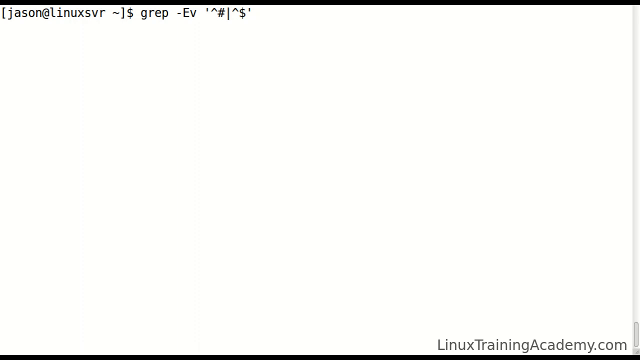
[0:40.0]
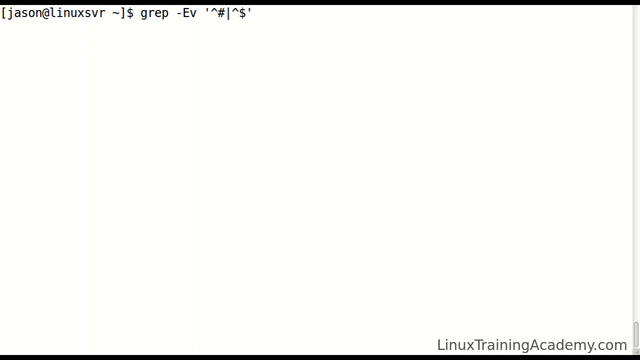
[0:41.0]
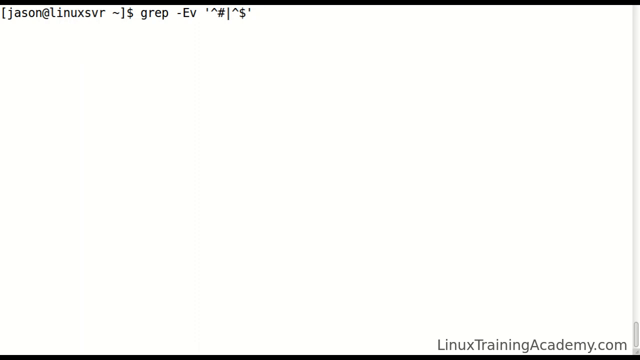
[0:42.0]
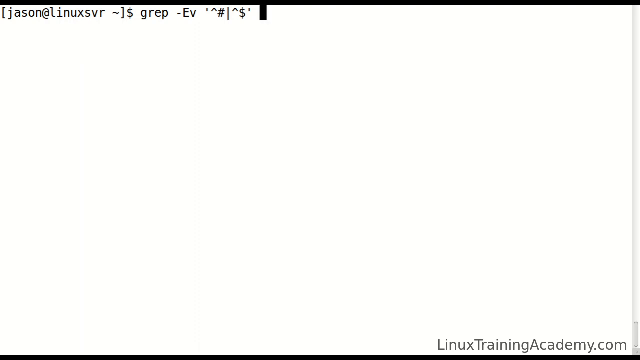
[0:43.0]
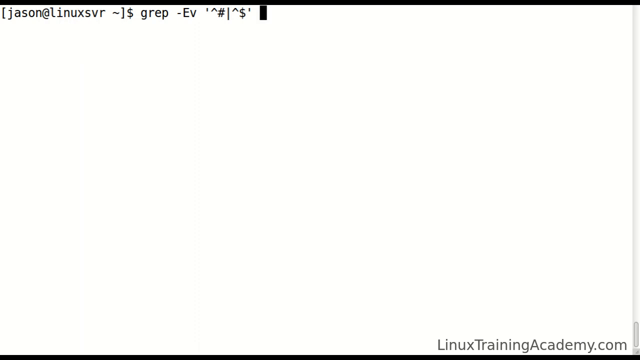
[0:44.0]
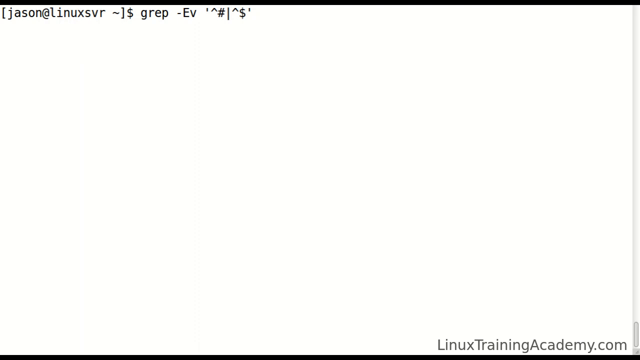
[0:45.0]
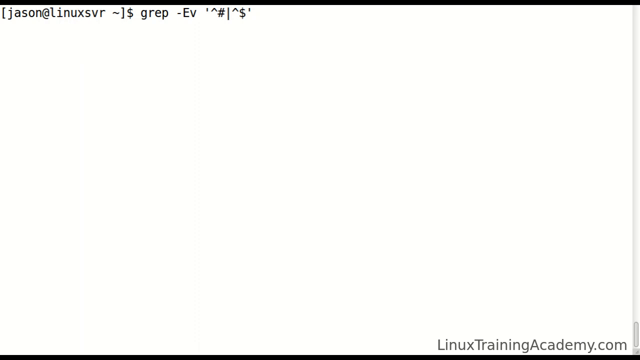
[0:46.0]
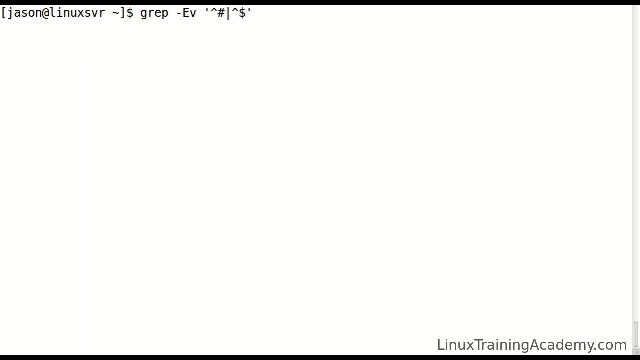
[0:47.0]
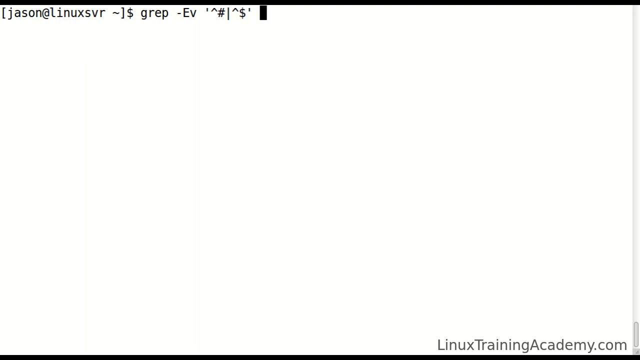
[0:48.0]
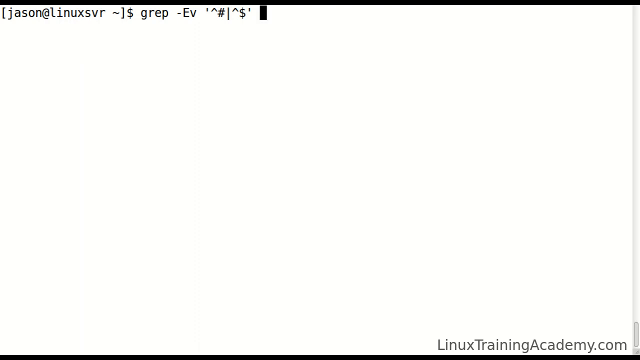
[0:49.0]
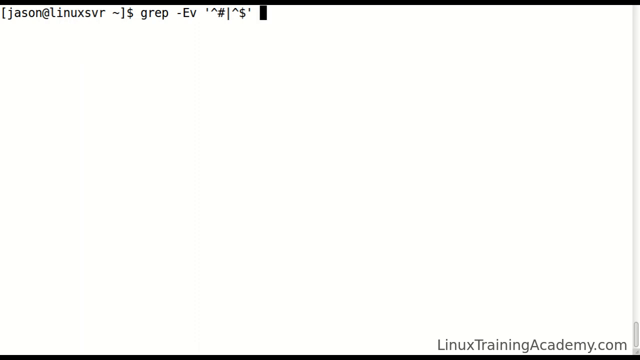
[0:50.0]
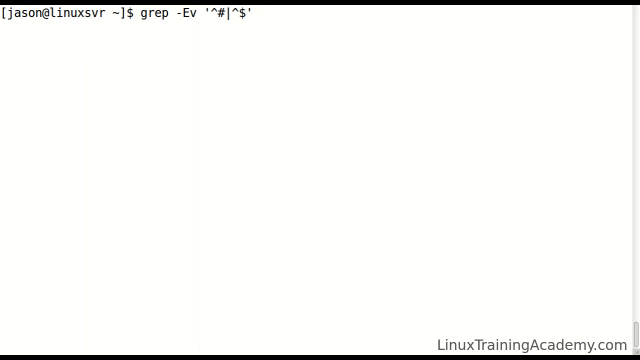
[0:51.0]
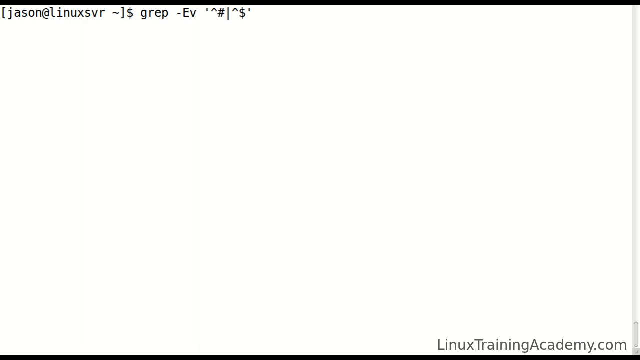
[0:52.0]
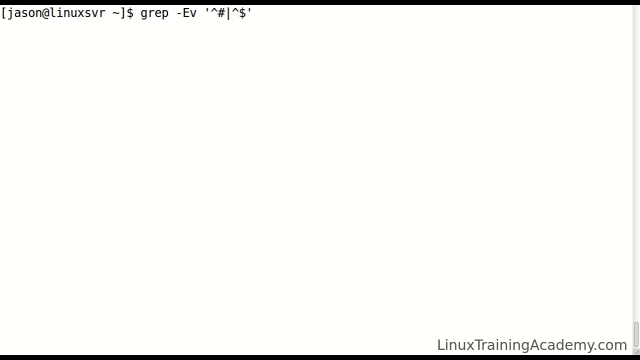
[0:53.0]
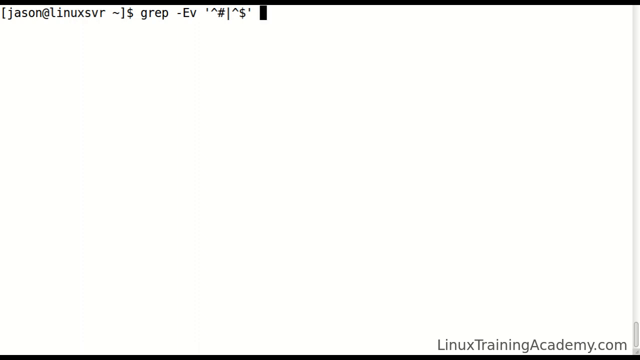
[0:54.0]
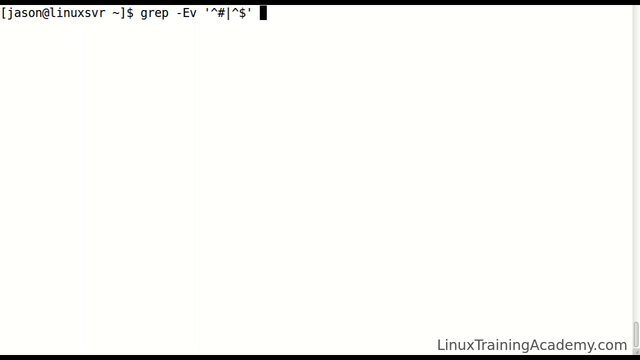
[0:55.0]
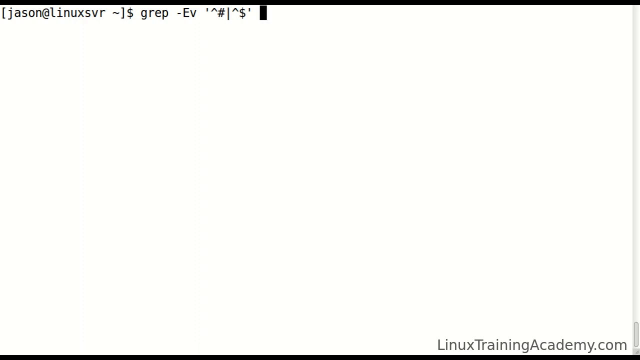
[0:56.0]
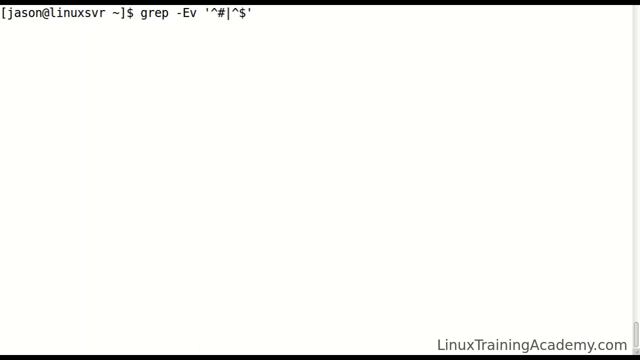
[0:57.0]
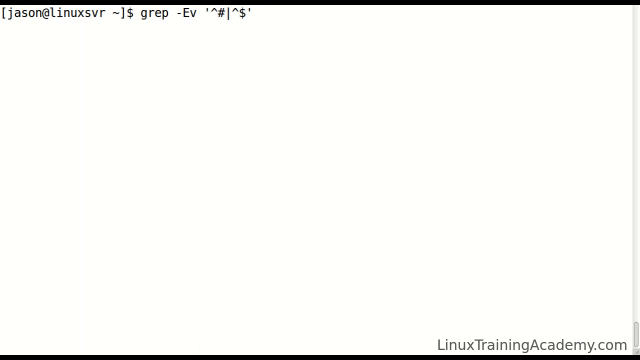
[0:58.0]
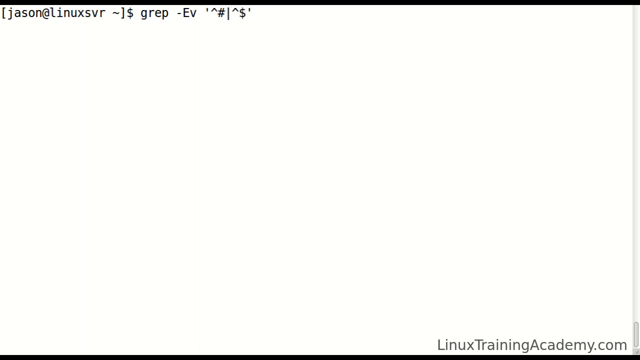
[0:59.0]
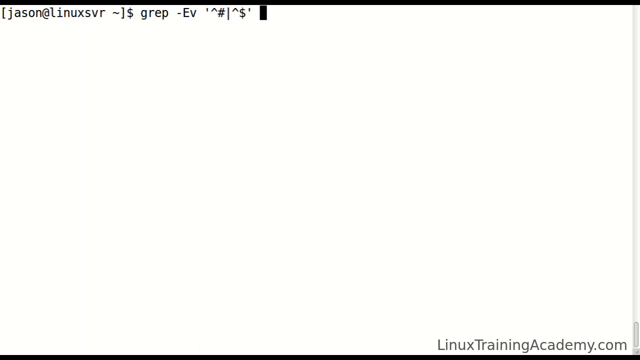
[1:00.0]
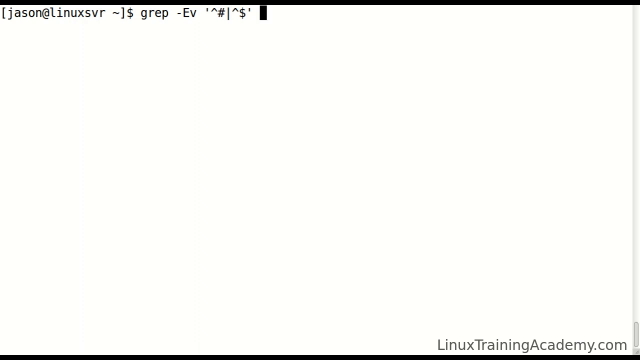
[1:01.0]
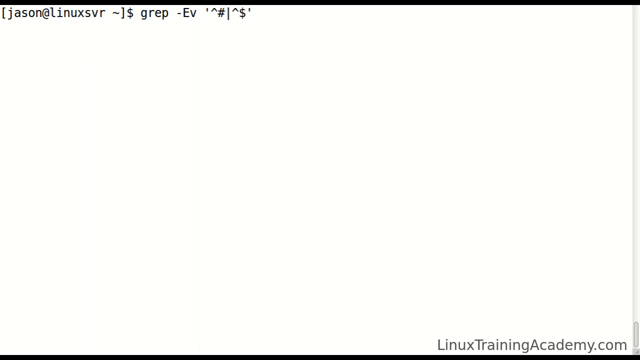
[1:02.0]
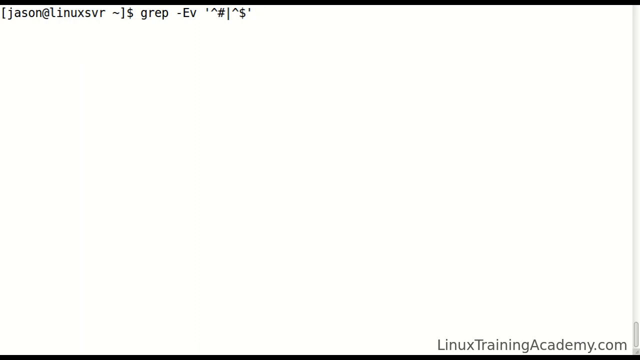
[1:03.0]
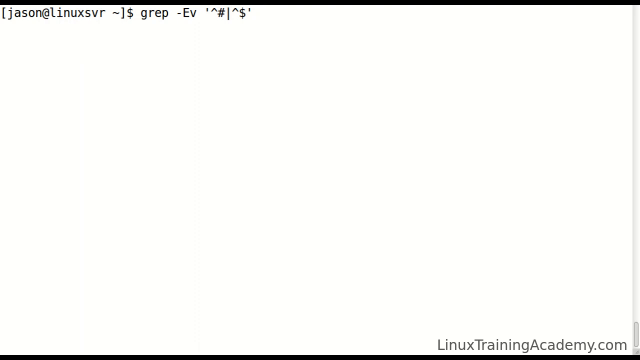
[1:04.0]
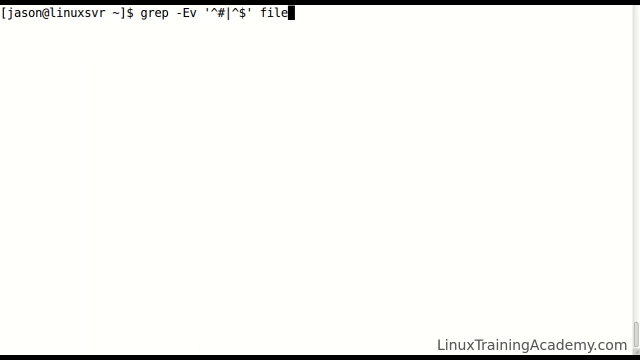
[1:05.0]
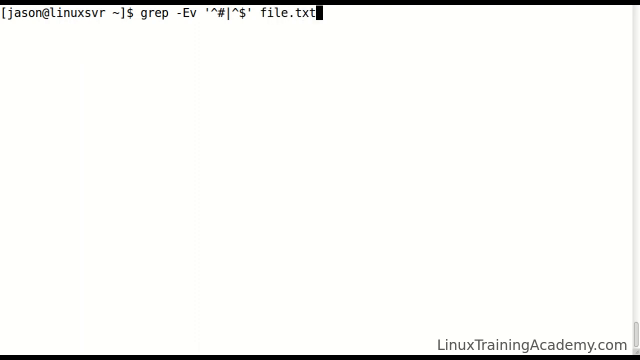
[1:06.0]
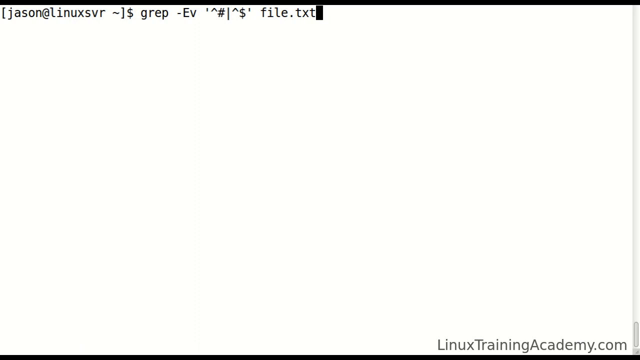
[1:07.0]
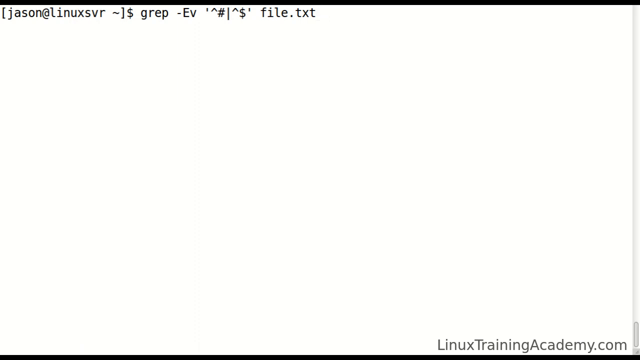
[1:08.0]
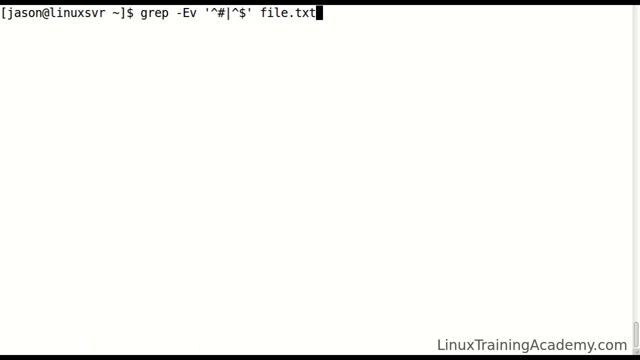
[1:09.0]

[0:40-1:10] A single line of code reading "[jason"linuxsvr ~ ]$ grep -Ev '^# |^$'" is on a white background in the top left-hand corner. A scroll bar on the right side appears to be scrolled all the way down, and black text in the bottom right-hand corner reads "linuxtrainingacademy.com". A flashing cursor stops at the end of the line of code. For a while there is no motion on the screen; then two more words are typed, which say "file" and "dot text". Nothing else moves, and there is no identifiable coding program or system; it looks like a notepad or Code++ system.